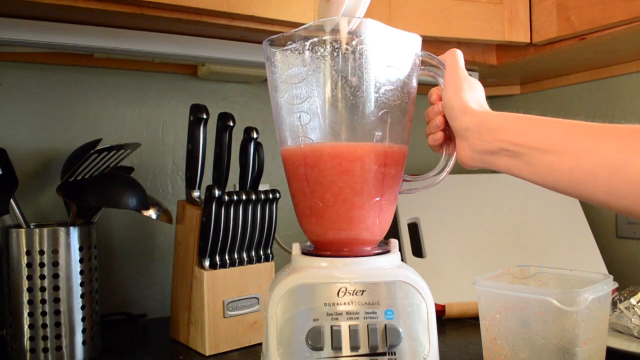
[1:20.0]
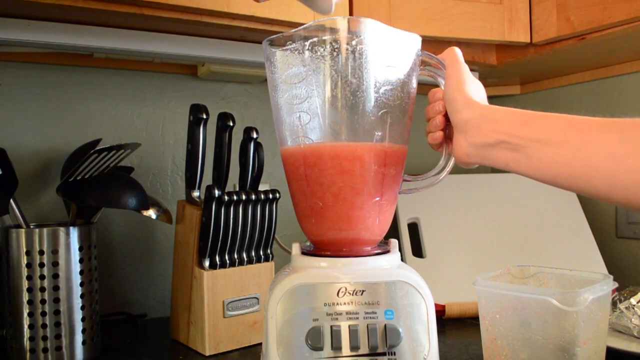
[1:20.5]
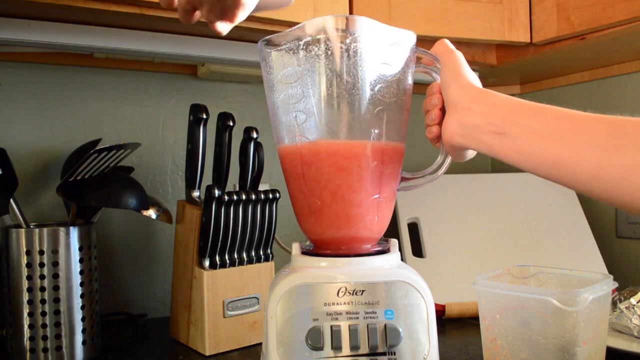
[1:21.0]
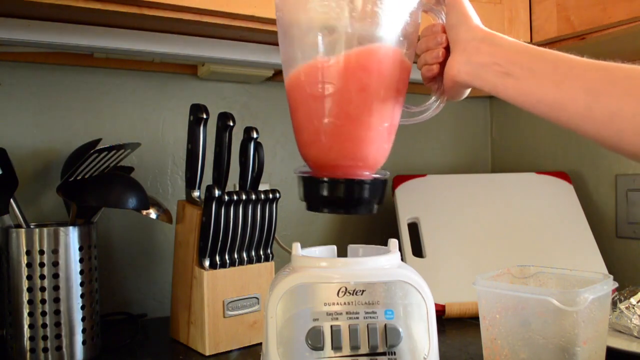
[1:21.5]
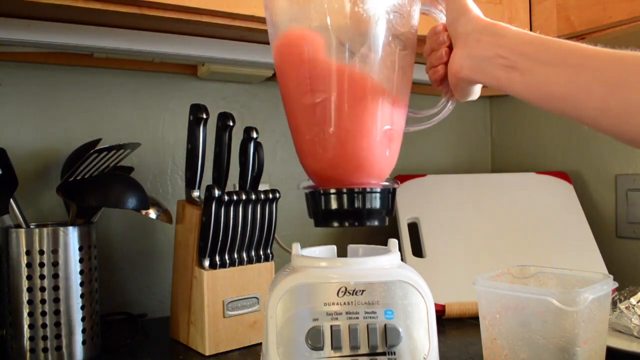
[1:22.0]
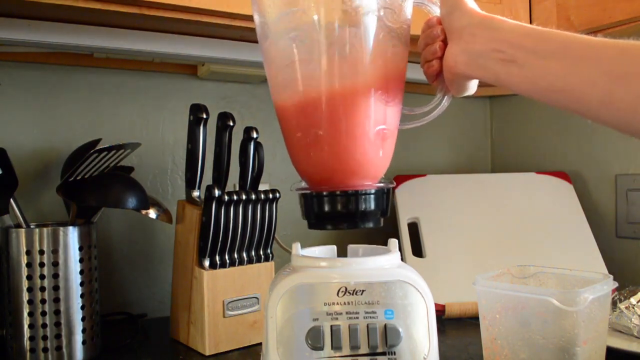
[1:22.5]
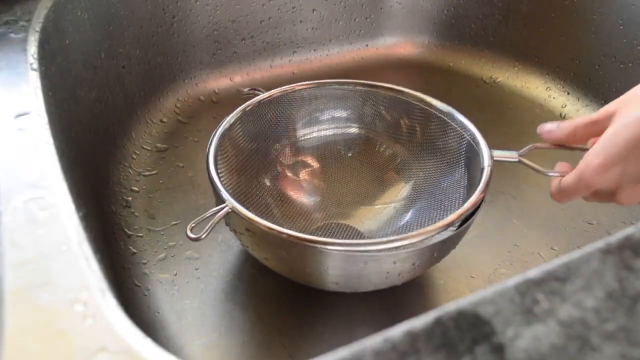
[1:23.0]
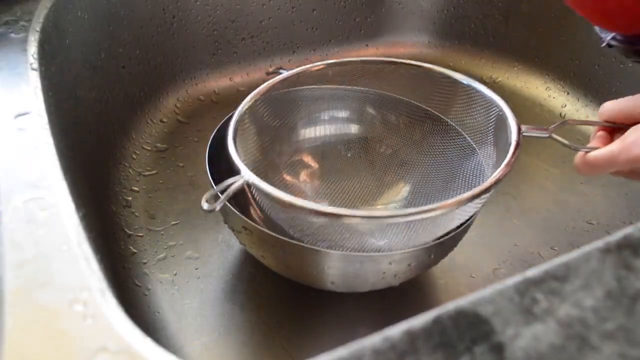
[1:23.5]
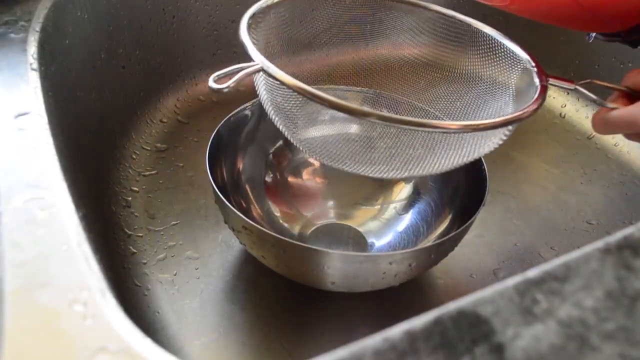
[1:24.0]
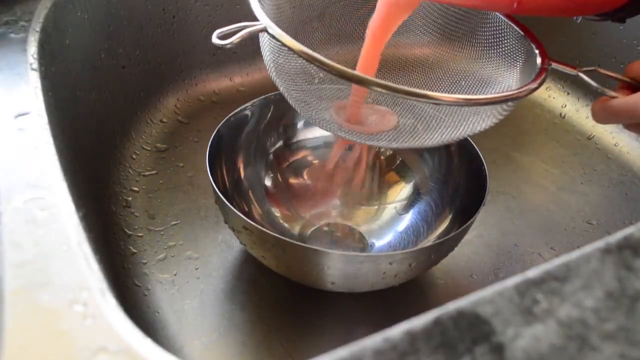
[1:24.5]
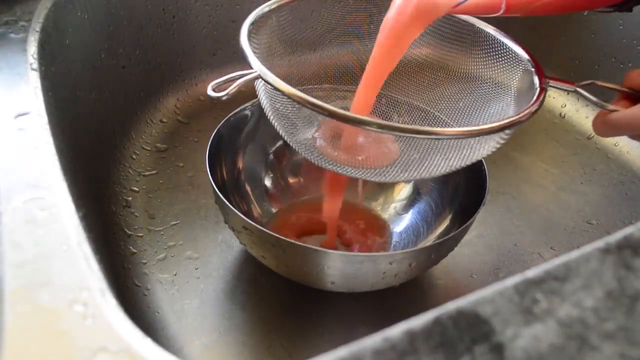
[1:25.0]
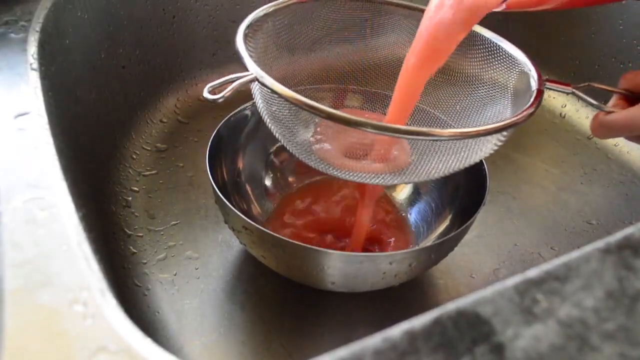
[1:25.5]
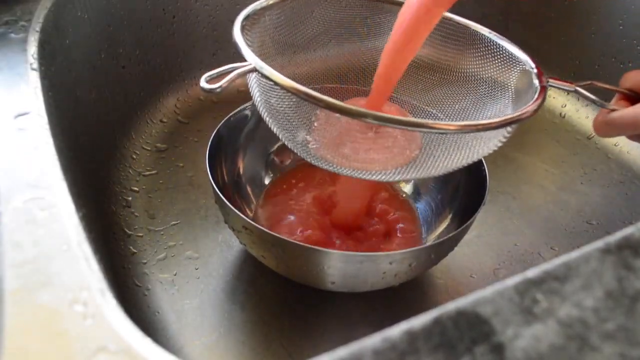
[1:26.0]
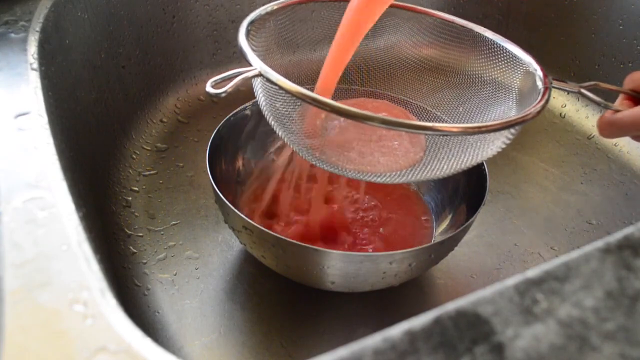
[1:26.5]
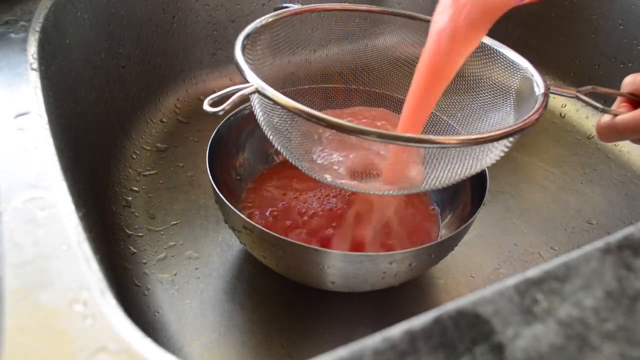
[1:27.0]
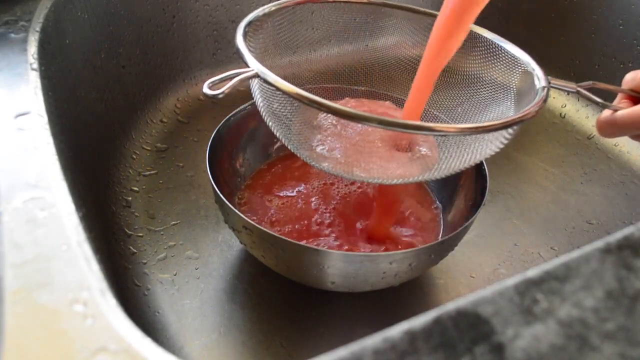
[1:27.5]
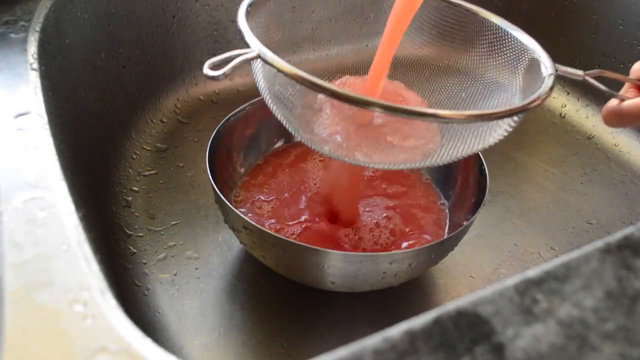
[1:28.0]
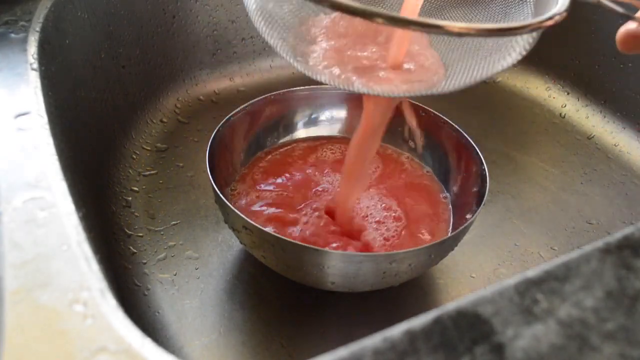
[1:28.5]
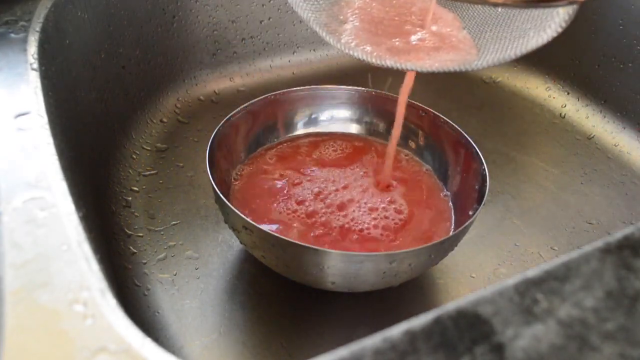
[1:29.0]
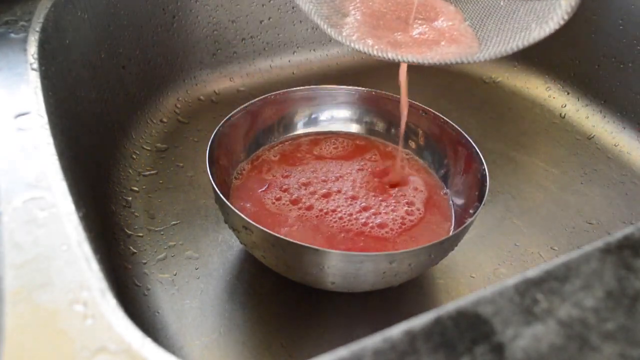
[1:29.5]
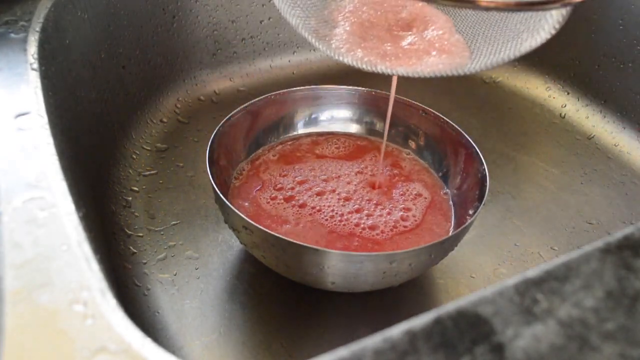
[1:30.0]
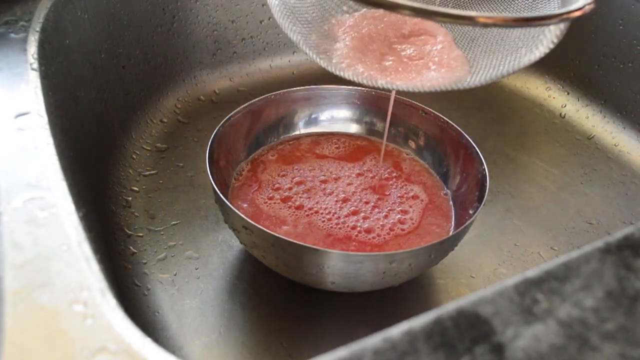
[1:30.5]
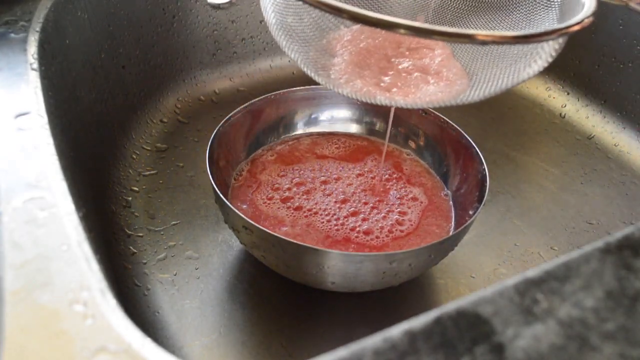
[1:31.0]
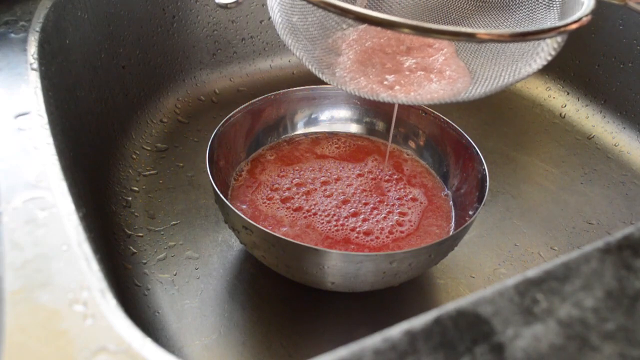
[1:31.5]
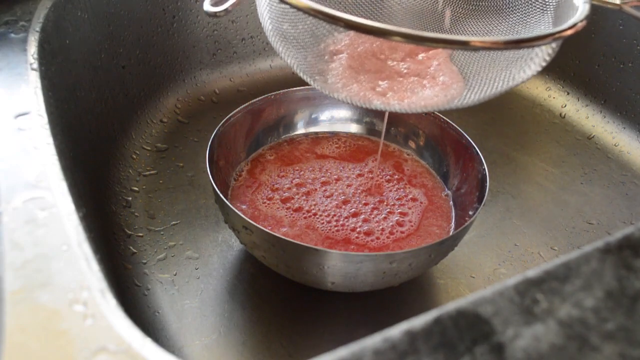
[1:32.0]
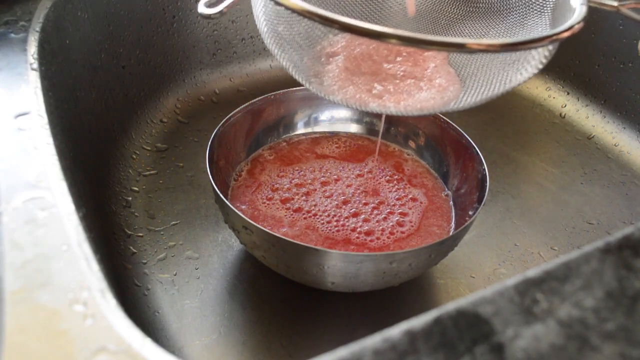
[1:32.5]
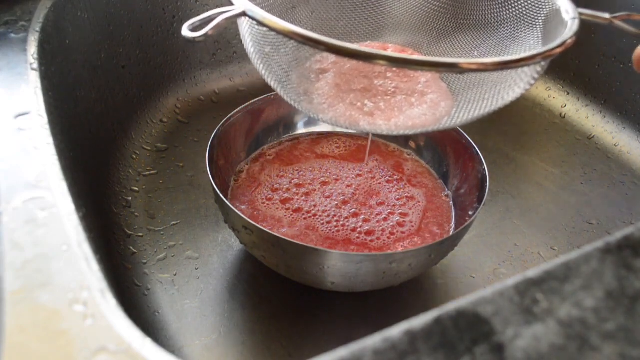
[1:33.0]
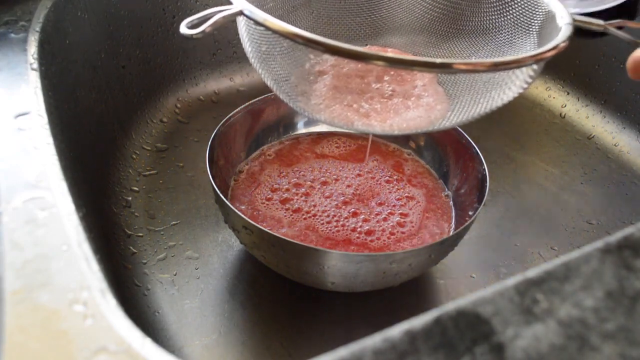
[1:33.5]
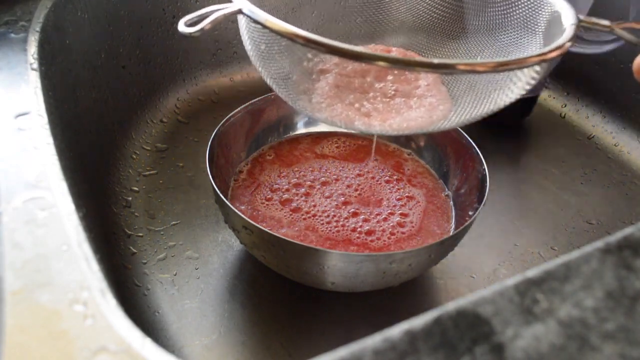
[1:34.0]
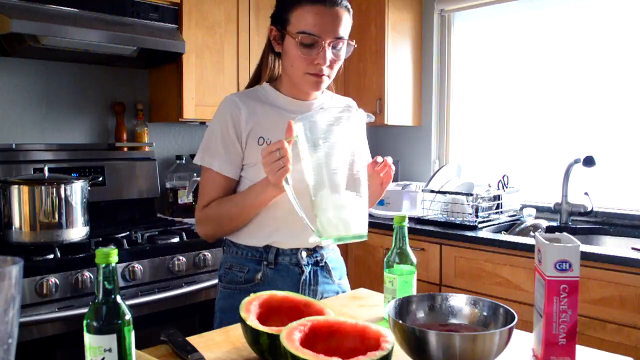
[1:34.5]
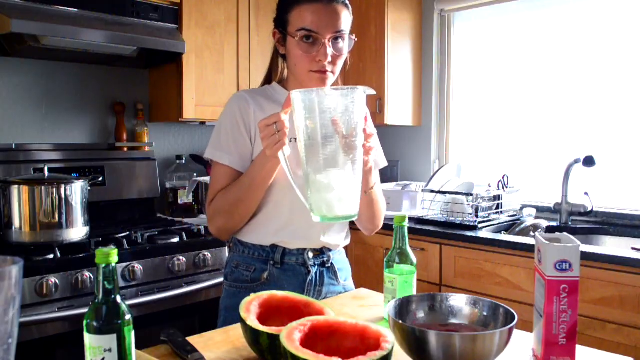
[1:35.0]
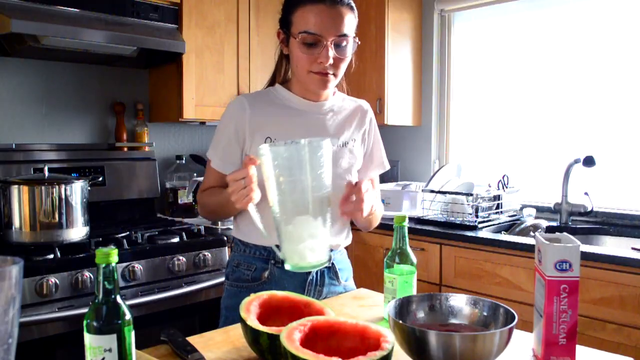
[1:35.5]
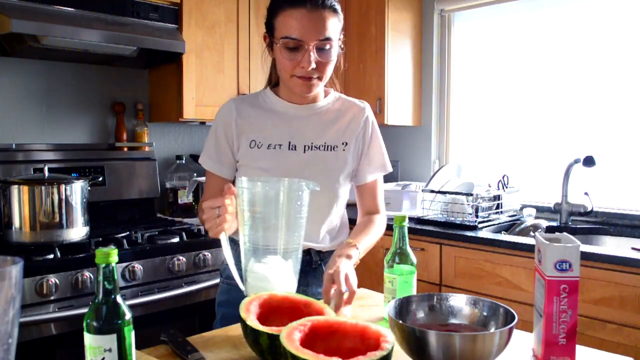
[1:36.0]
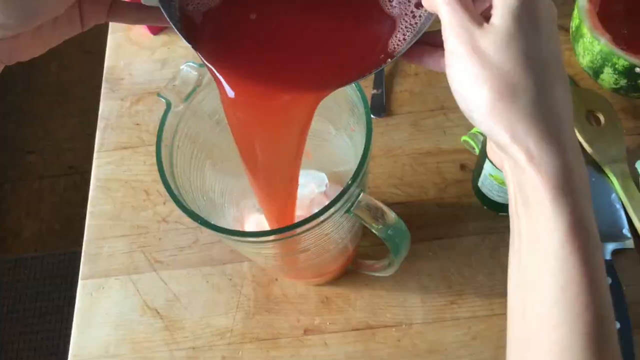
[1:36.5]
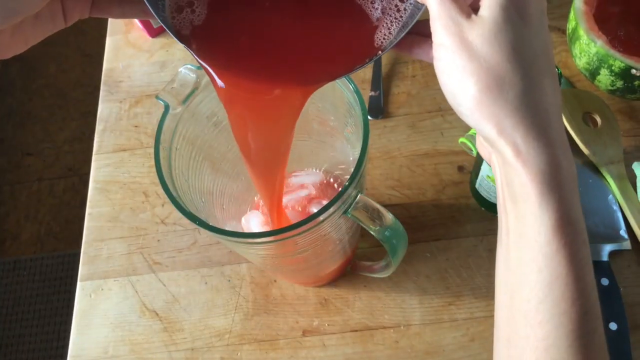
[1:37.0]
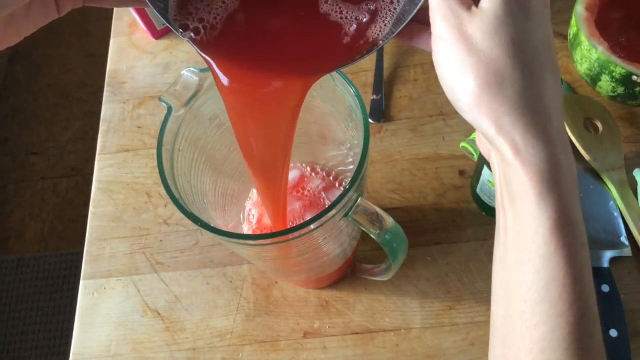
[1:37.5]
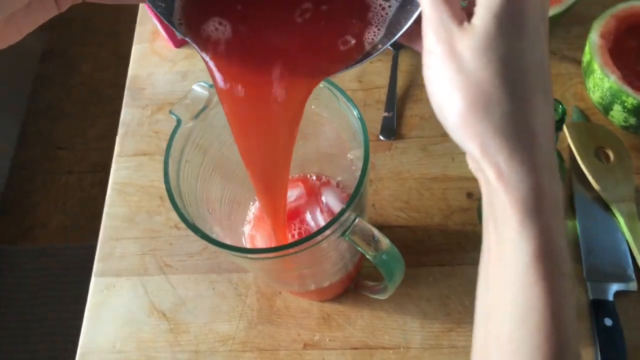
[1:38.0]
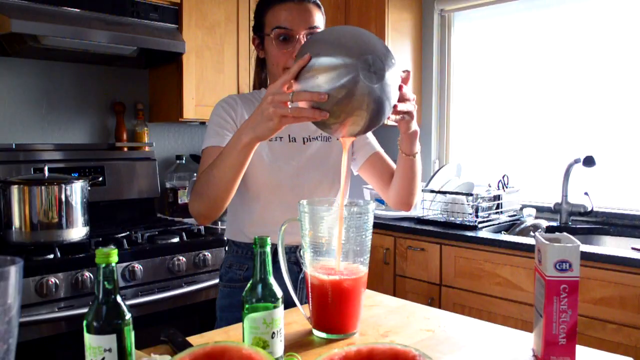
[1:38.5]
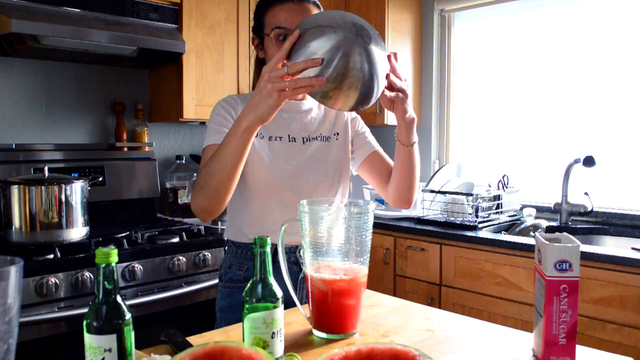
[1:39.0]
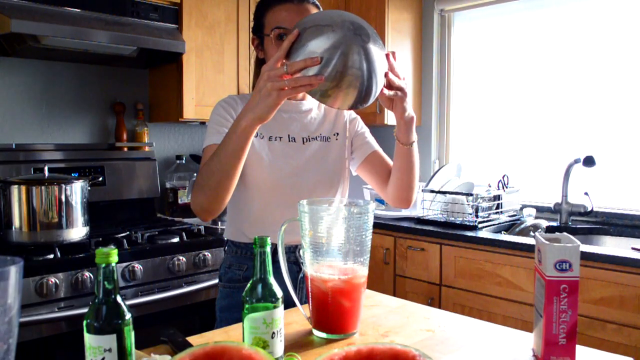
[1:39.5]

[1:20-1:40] A woman in her kitchen holds a blender that has finished blending a batch of watermelon. She takes the blender off the base and pours the mixture through a strainer into a metal bowl, leaving some pieces of watermelon in the strainer. She then pours the watermelon into a pitcher with some ice. She picks up a green bottle holding a clear beverage, presumably alcoholic, with writing on the bottle that appears to be Korean, and begins pouring it into the watermelon mixture. She appears to be preparing some sort of watermelon alcoholic beverage.